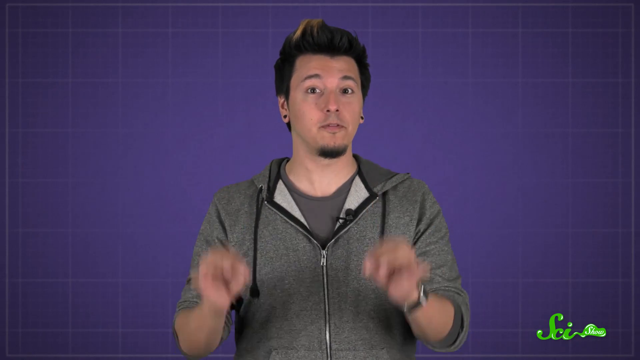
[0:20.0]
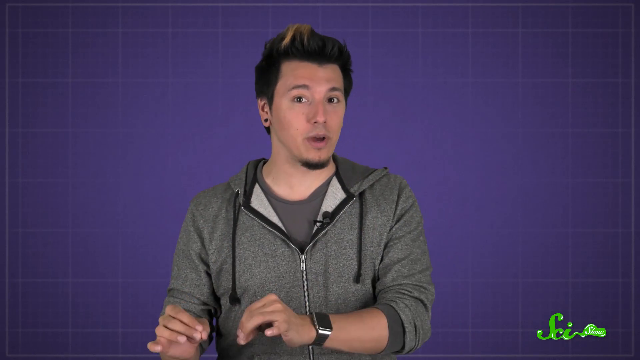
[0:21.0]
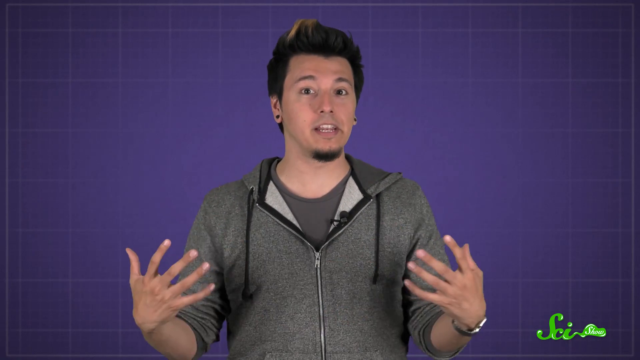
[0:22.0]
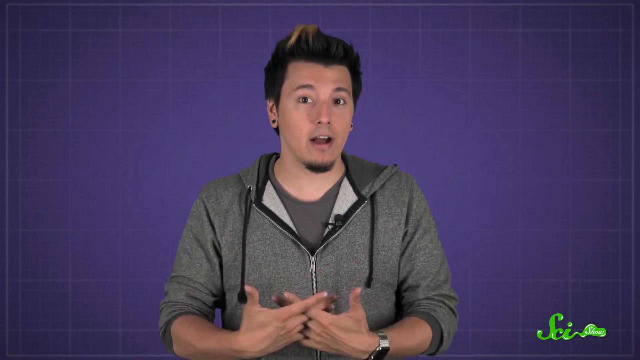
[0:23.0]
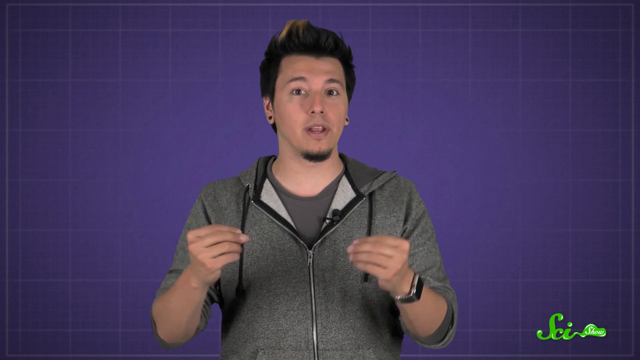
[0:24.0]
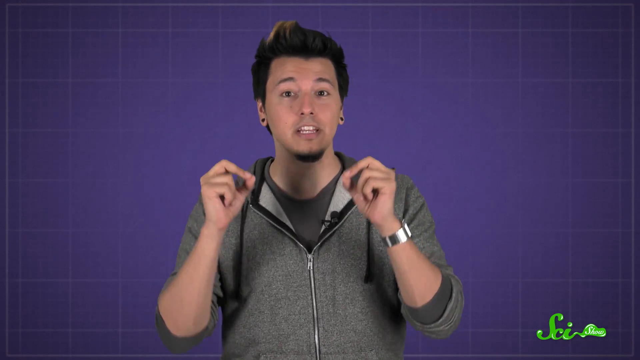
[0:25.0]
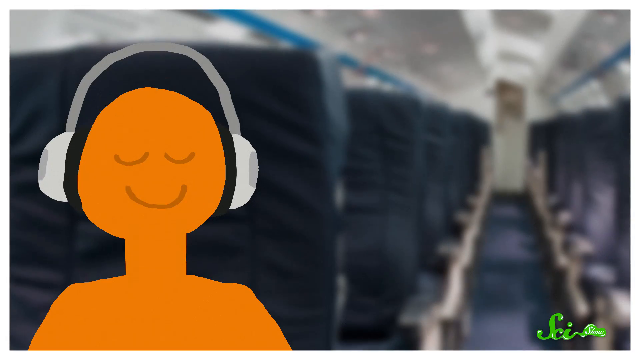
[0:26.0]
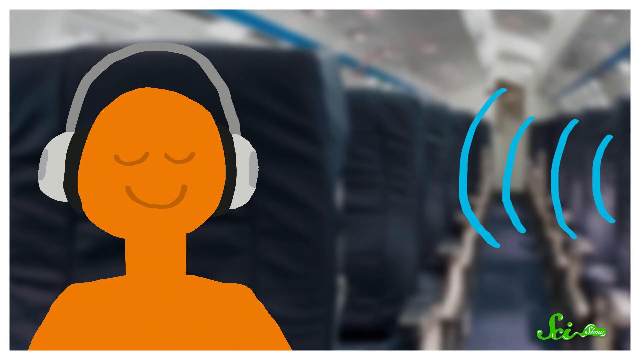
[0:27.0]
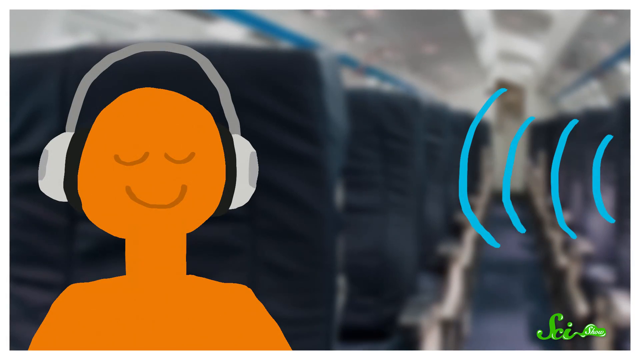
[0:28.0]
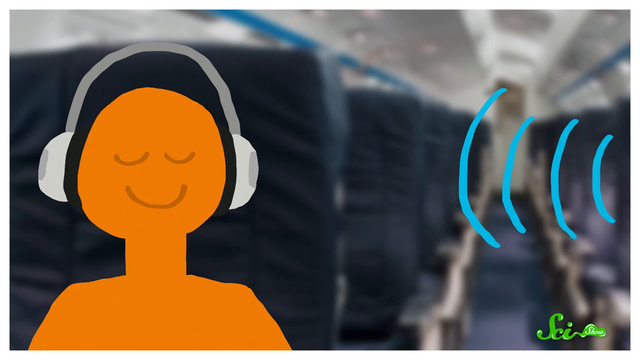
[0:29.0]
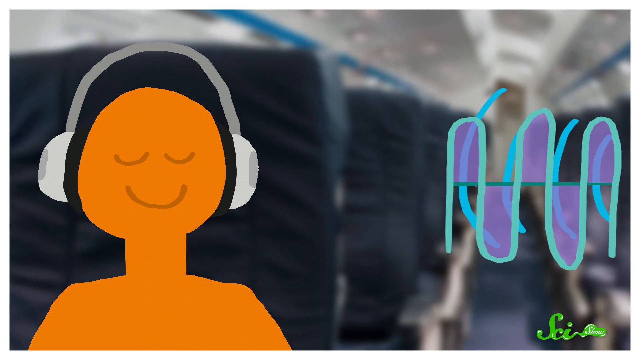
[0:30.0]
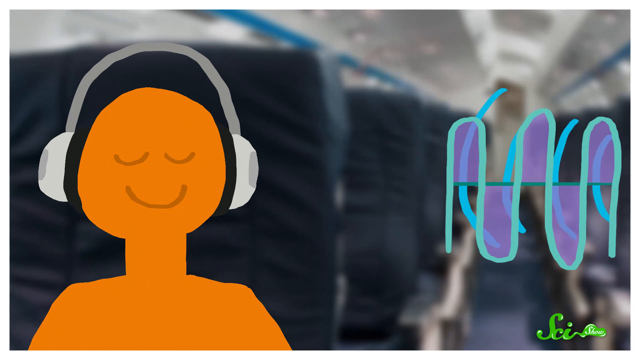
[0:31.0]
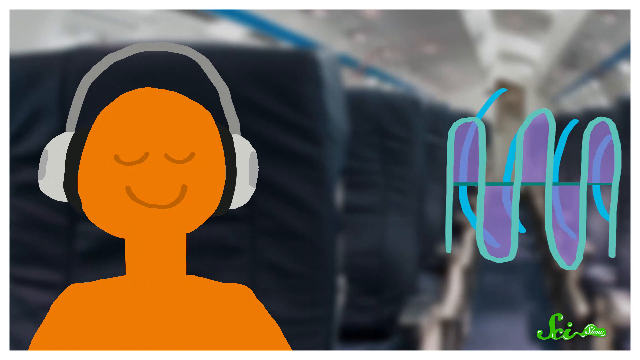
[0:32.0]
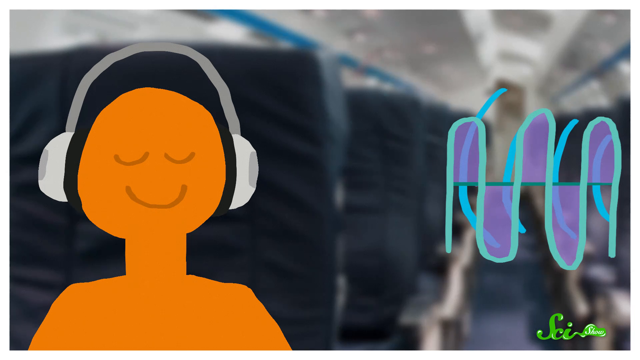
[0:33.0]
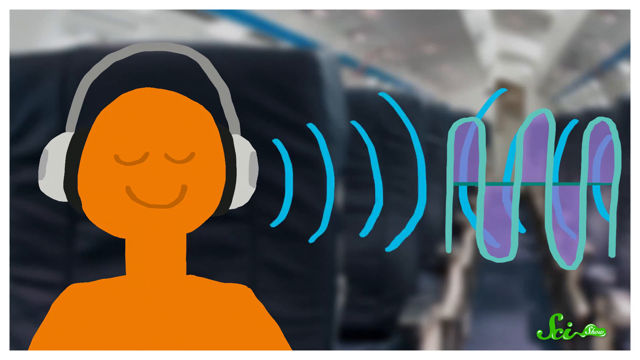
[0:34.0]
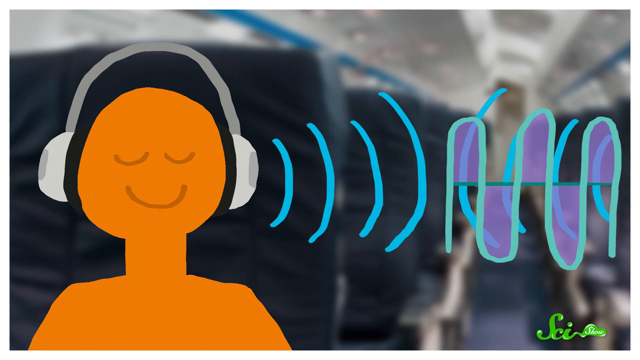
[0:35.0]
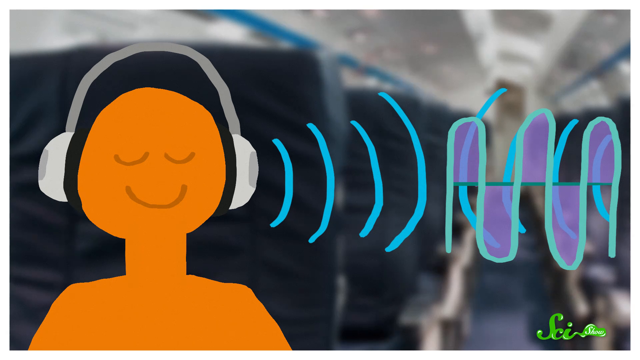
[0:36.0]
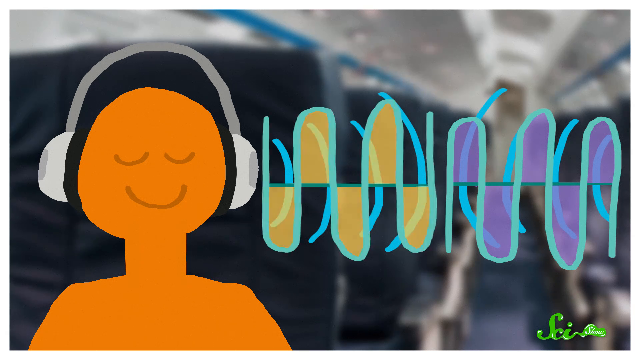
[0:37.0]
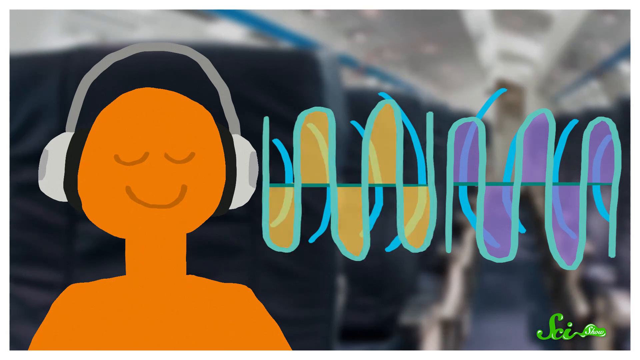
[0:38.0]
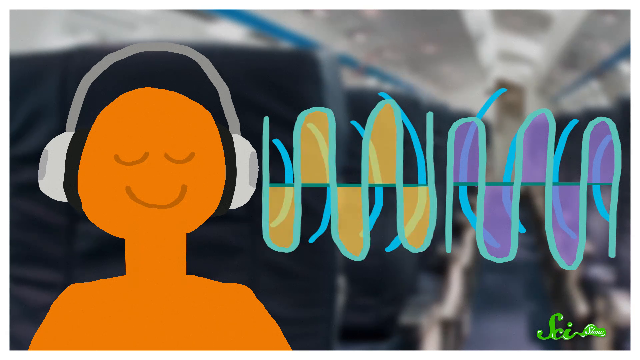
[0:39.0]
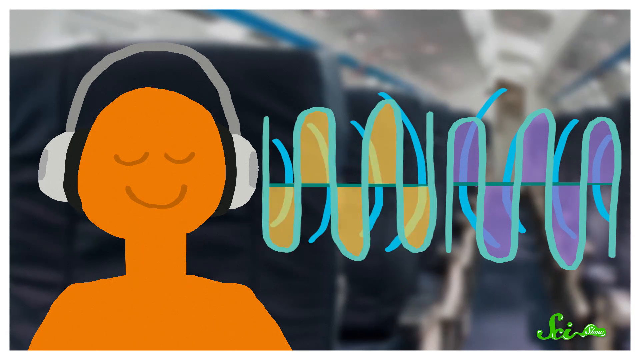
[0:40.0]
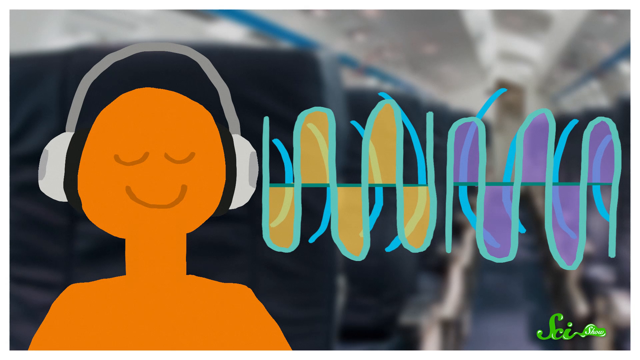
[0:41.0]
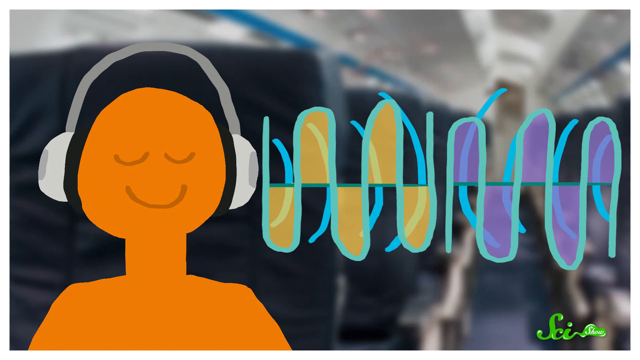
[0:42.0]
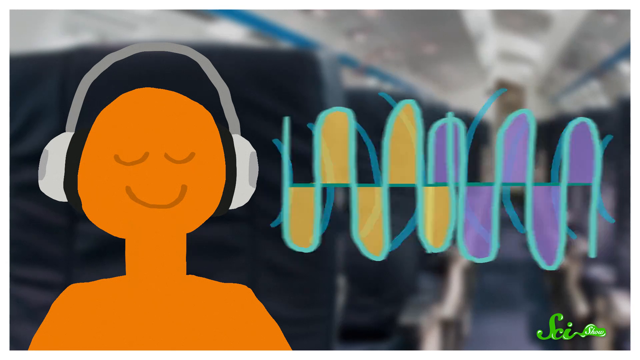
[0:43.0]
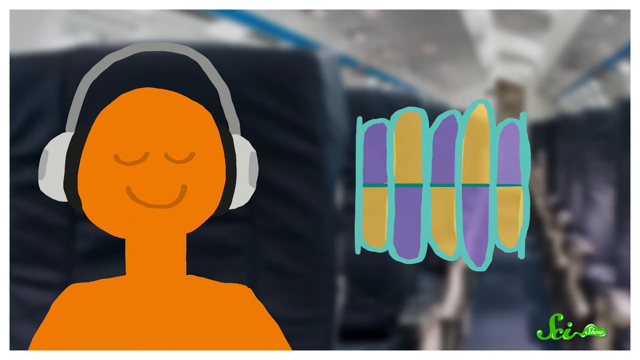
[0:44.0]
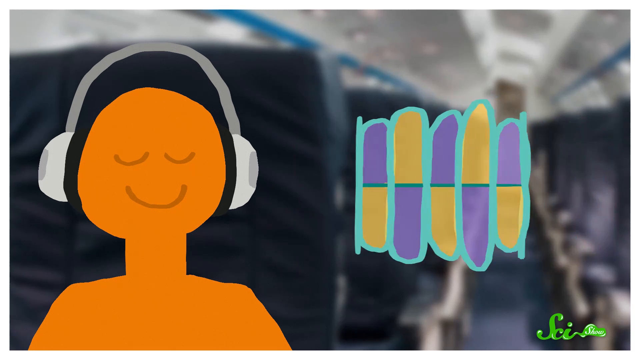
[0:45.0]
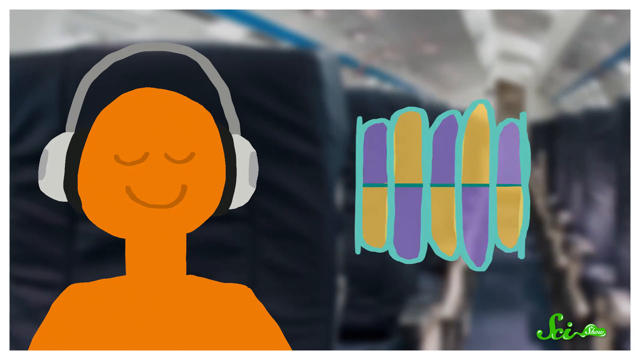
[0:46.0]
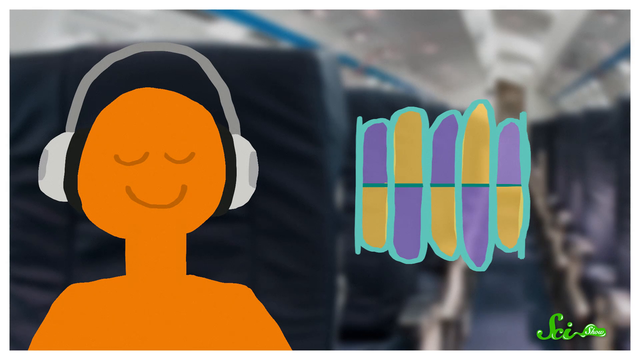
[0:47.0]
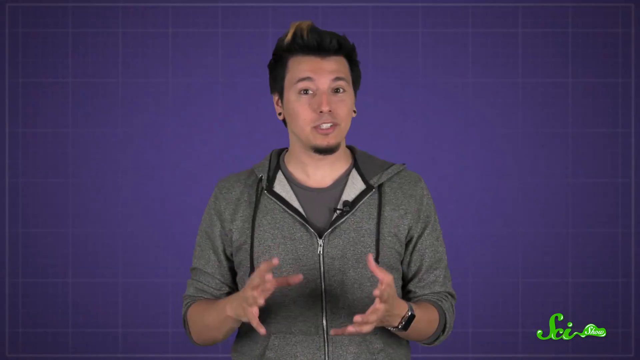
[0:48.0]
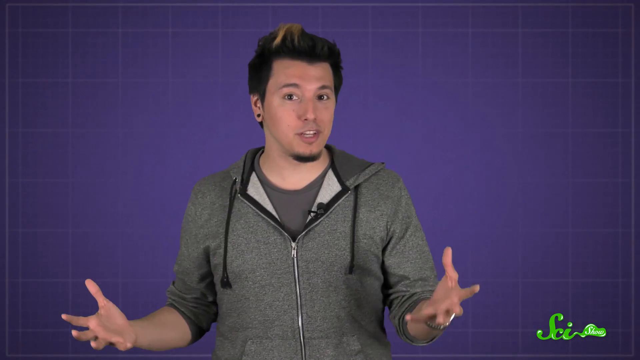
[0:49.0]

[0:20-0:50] The same gentleman talks in front of the blue background, moving his hands a lot. The video cuts to an orange graphic of a person on an airplane wearing gray headphones, with blue half circles in front of him signaling sound, apparently showing that he can't hear the sound because the headphones are noise cancelling. Some of the sound graphic is purple and other parts are orange, shown in relation to the headphones. The SciShow logo remains in the lower right-hand corner. The video cuts back to the gentleman talking, still wearing the hoodie, the smartwatch and the plug earrings, talking a lot with his hands in front of the blue background.